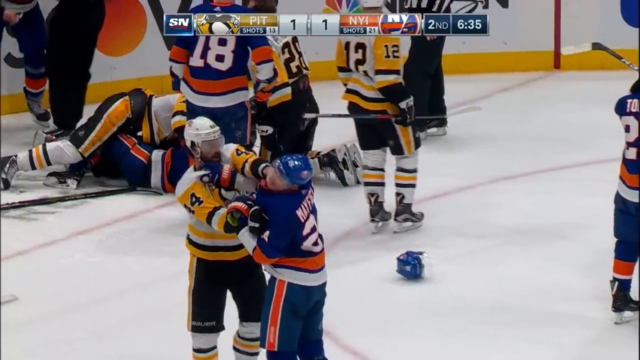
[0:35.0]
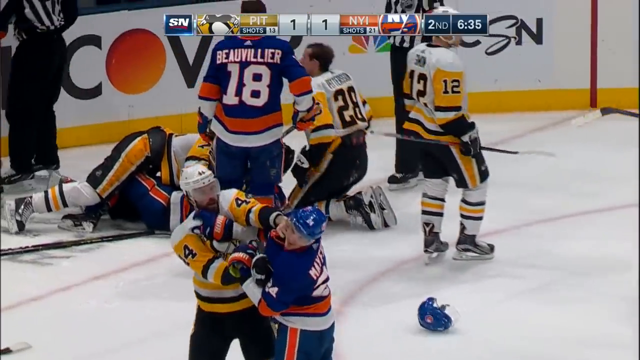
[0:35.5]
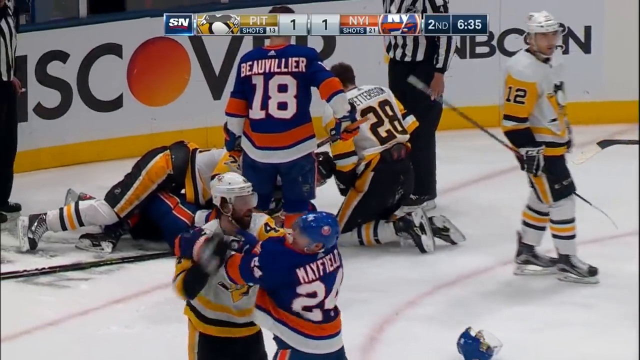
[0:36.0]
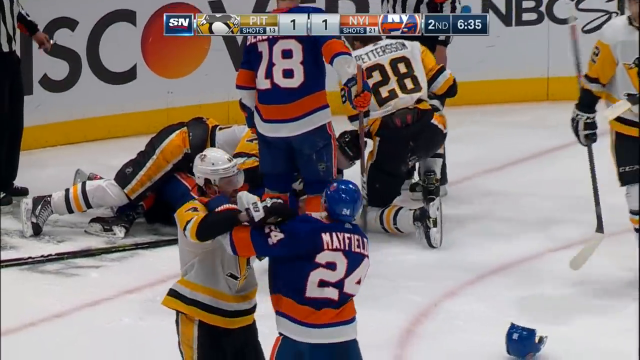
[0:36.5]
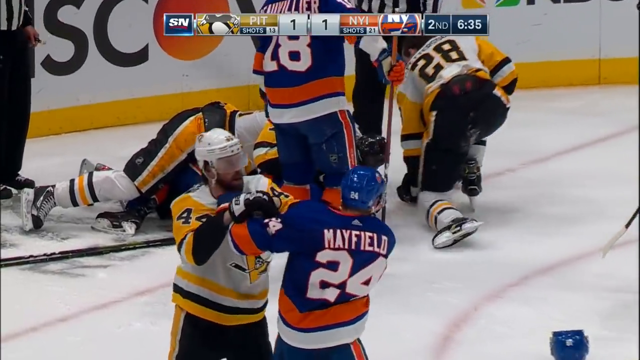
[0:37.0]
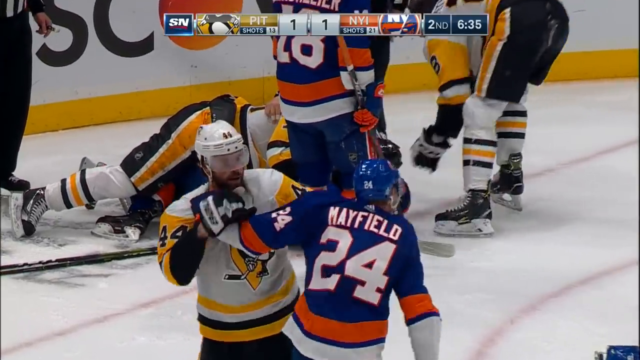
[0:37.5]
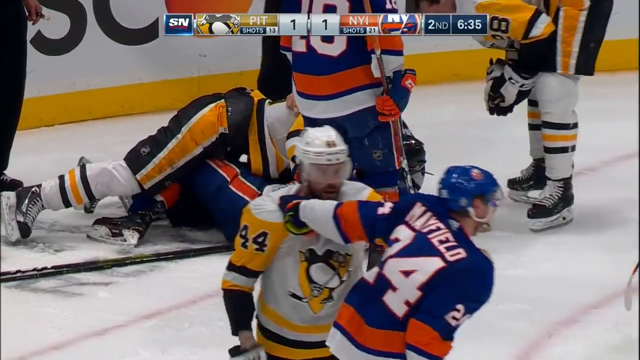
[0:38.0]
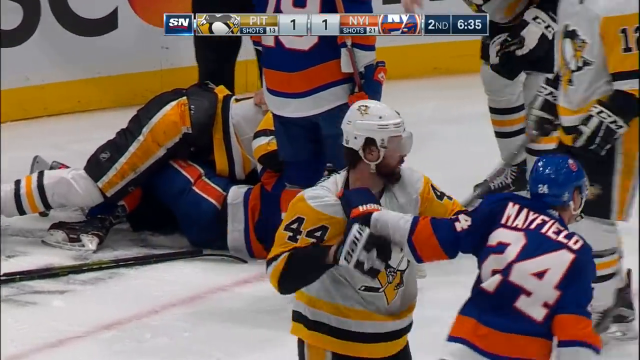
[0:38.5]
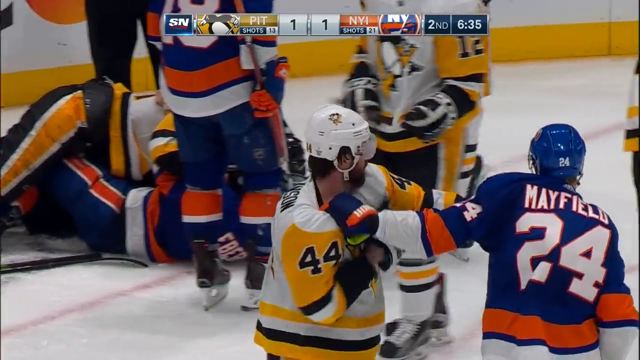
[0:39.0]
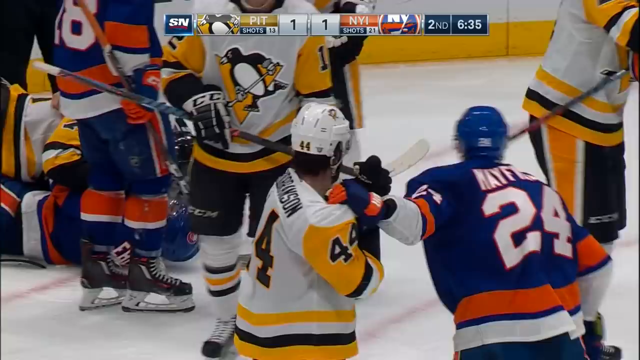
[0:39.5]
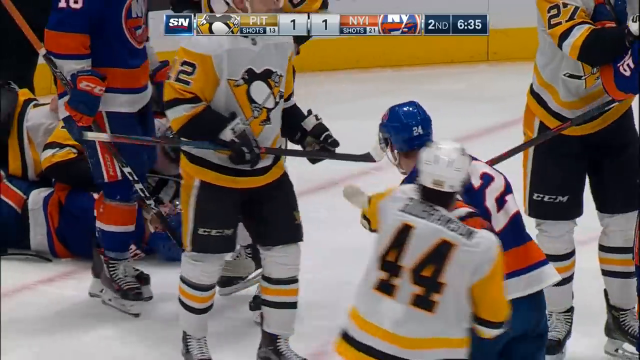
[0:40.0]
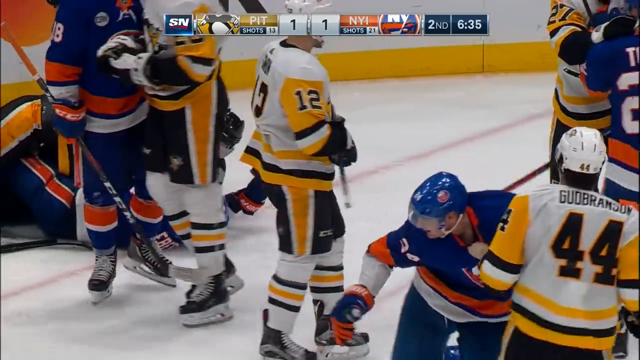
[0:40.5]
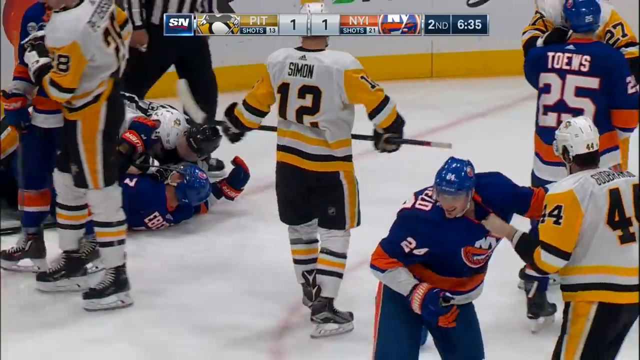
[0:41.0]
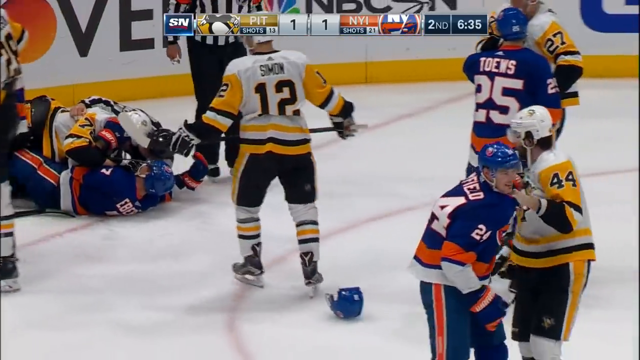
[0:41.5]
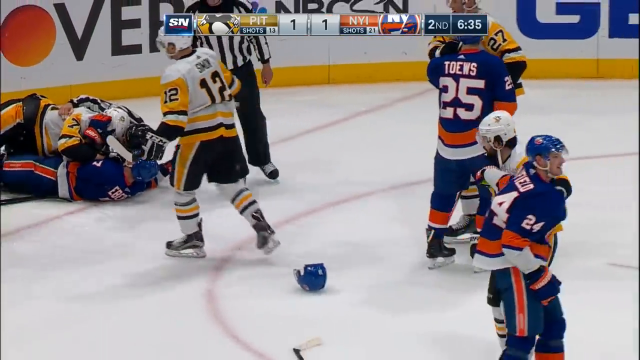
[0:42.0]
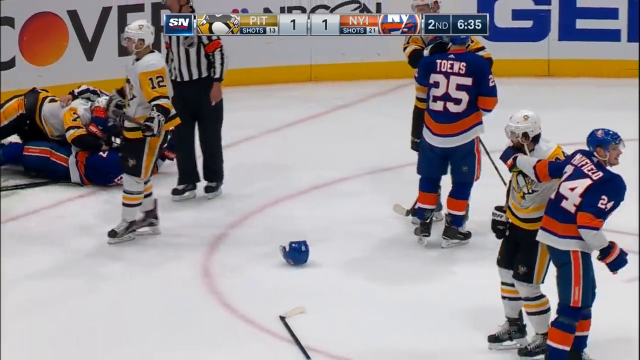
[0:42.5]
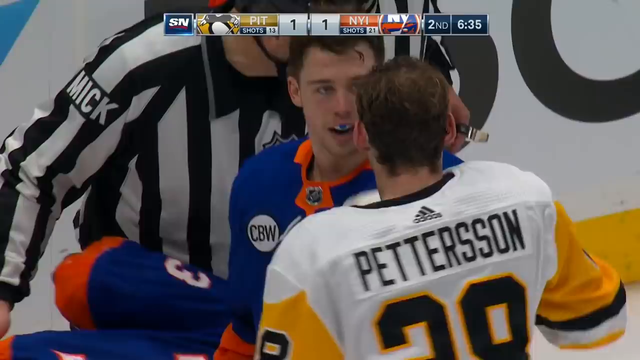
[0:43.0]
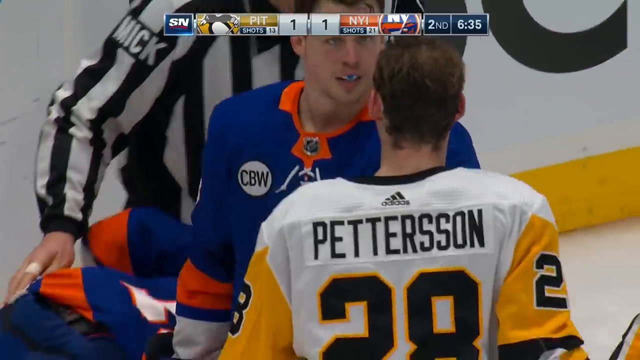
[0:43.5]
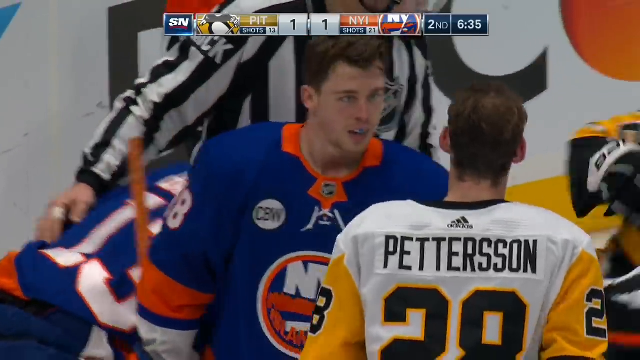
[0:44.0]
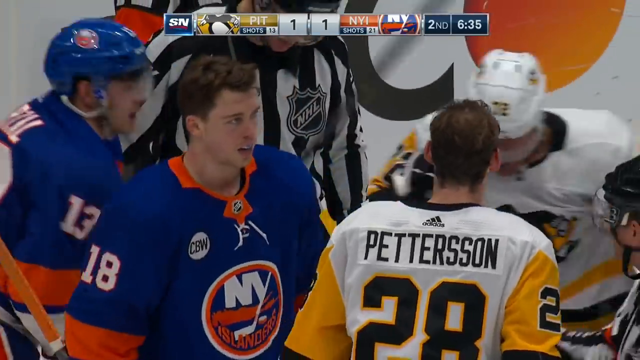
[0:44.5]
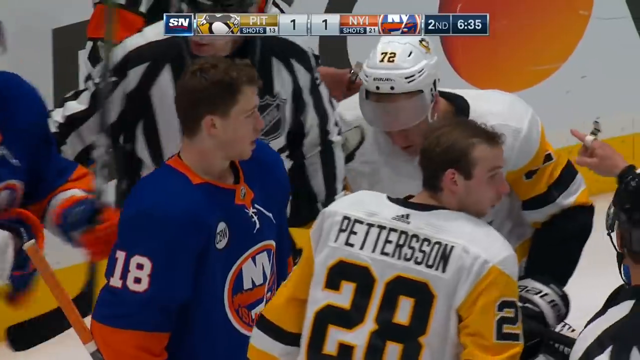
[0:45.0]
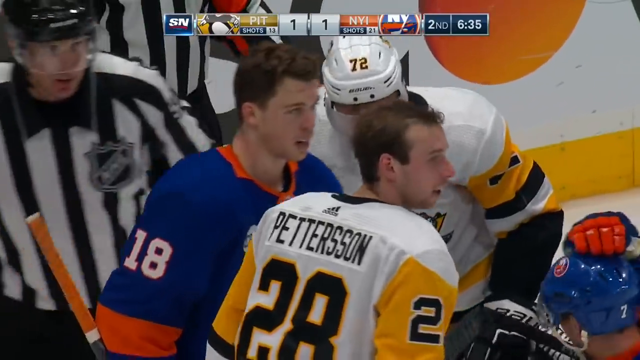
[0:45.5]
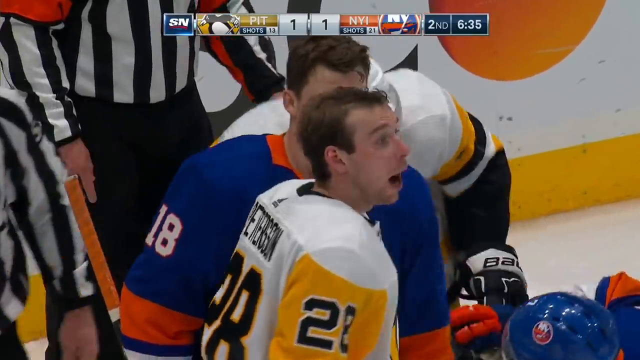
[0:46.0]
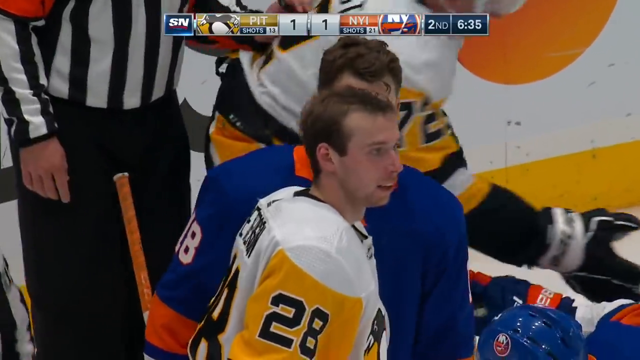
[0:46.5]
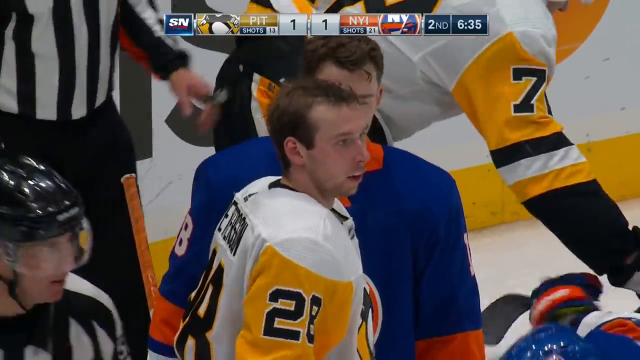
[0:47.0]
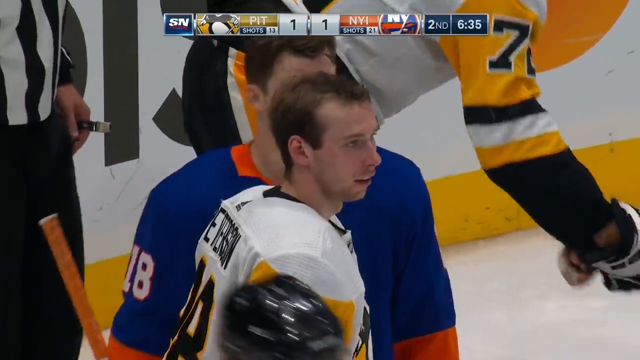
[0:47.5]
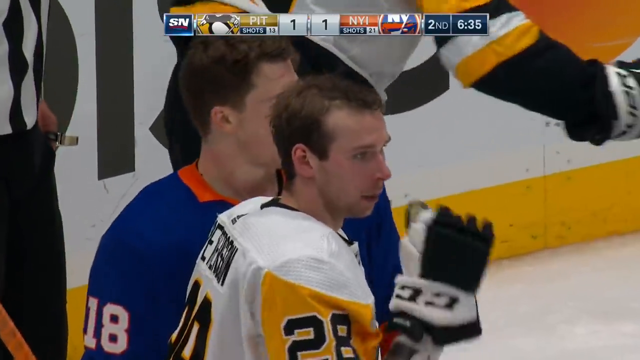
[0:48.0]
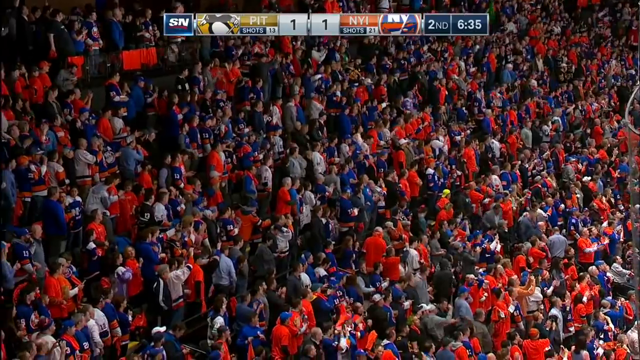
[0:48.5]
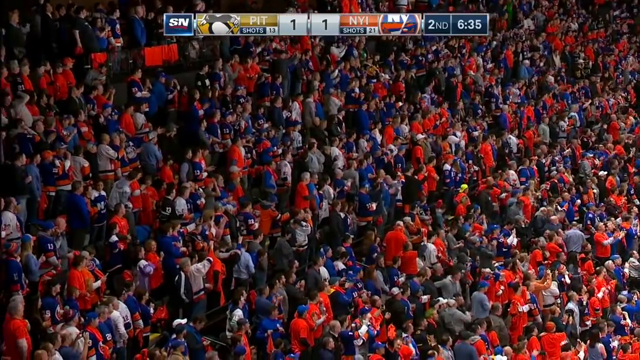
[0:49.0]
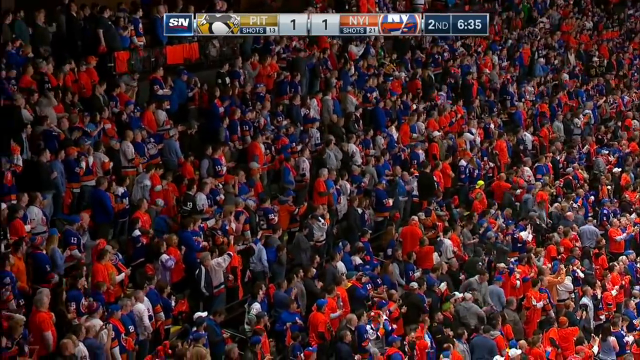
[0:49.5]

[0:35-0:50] The fight slowly gets broken up. Two players with their helmets off continue to talk trash to each other, and they appear to be communicating with the rest of their teammates to stop and lay off. Players help each other get up, and everything slows down toward a return to normal play. The bar at the top of the screen has the network name "SN", a Pittsburgh logo followed by "PIT" and a score of 1, and next to that another score of 1 with "NYI" for the New York Islanders. It is the second period with 6.35 left in the period. The scuffle is almost over. The camera then pans out to the fans, who are all on their feet cheering and encouraging the fighting; they appear to be enjoying it.